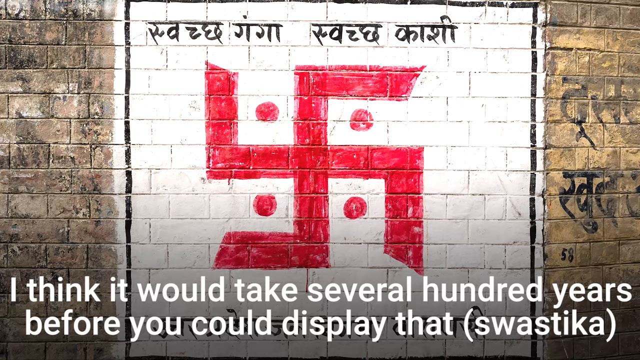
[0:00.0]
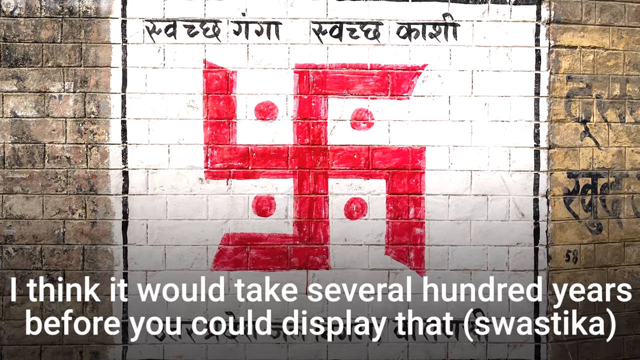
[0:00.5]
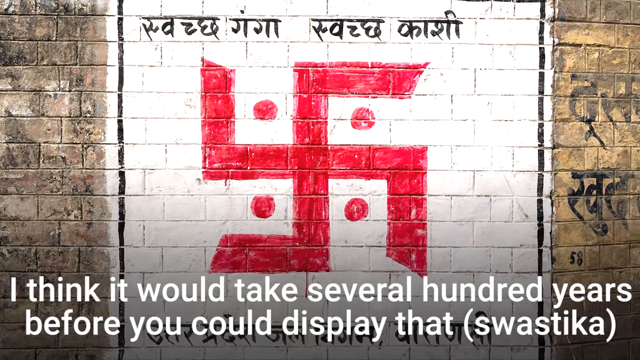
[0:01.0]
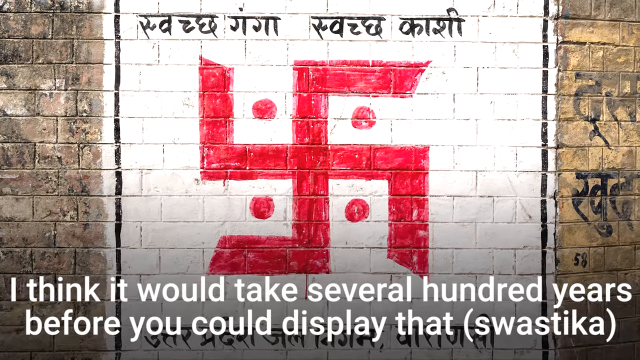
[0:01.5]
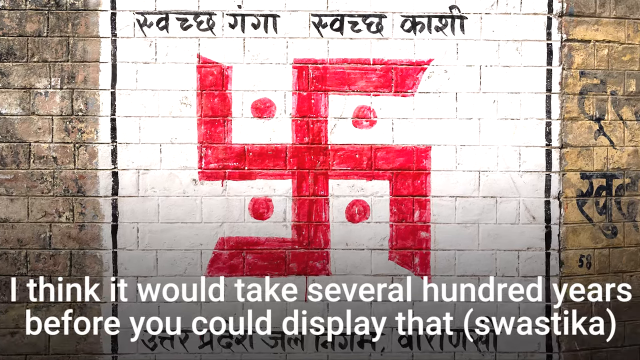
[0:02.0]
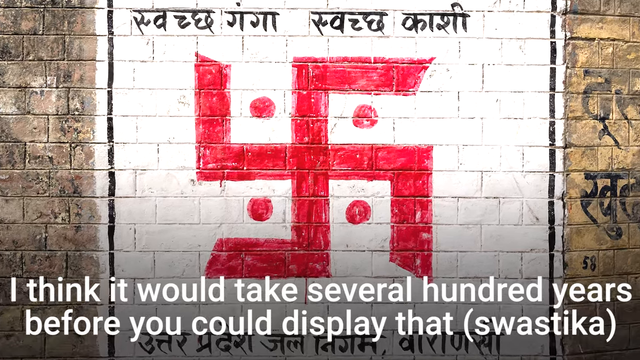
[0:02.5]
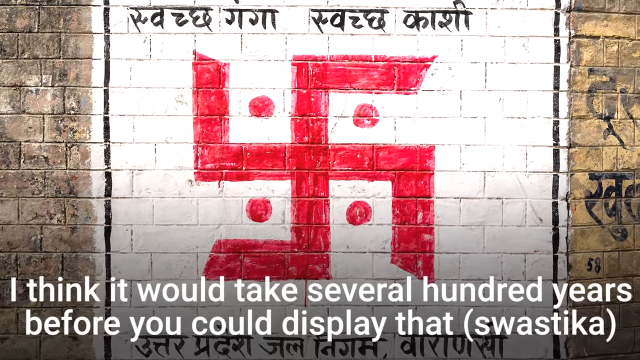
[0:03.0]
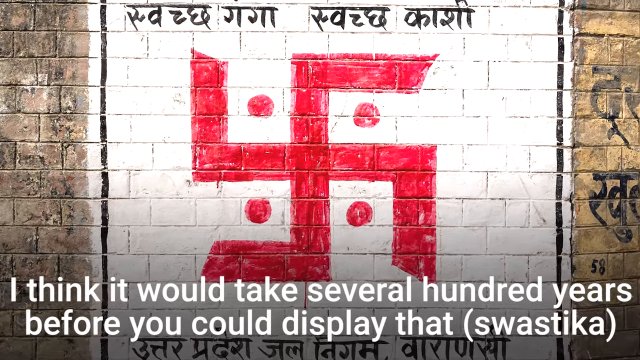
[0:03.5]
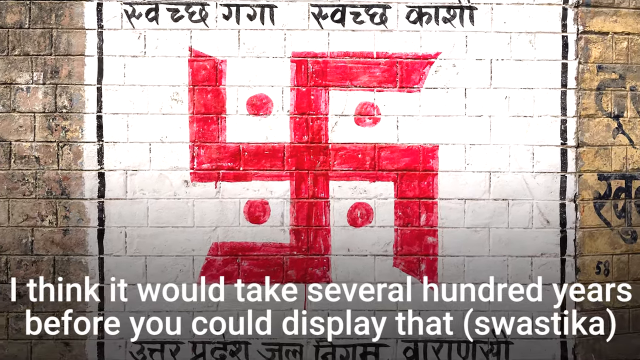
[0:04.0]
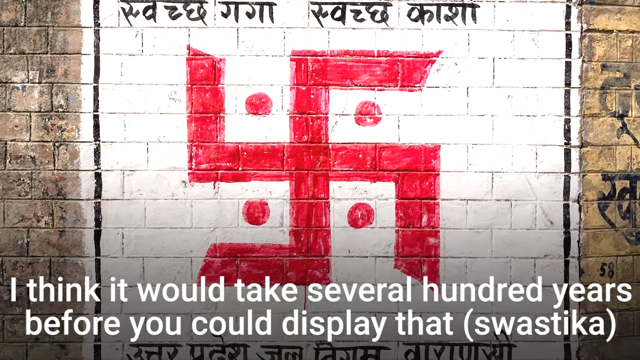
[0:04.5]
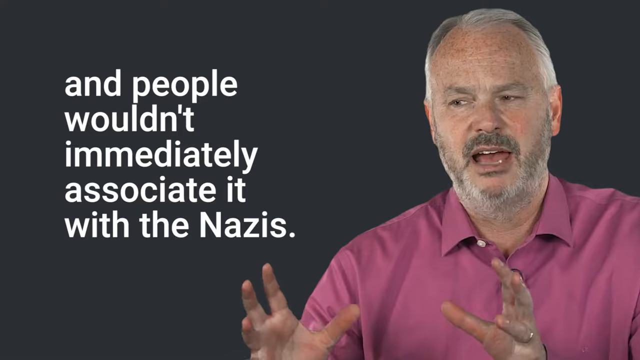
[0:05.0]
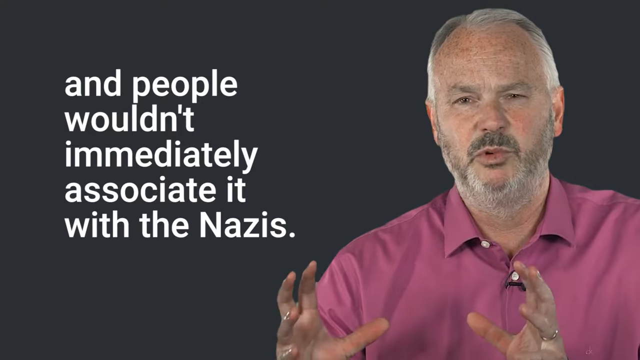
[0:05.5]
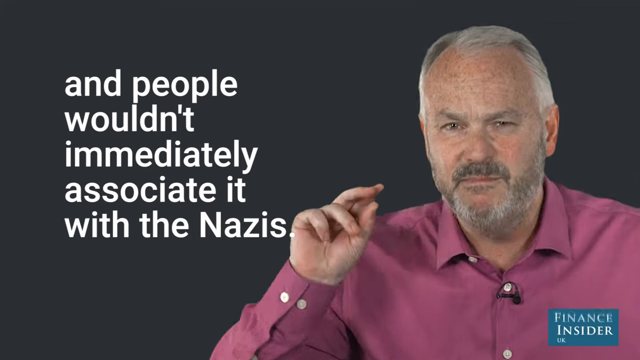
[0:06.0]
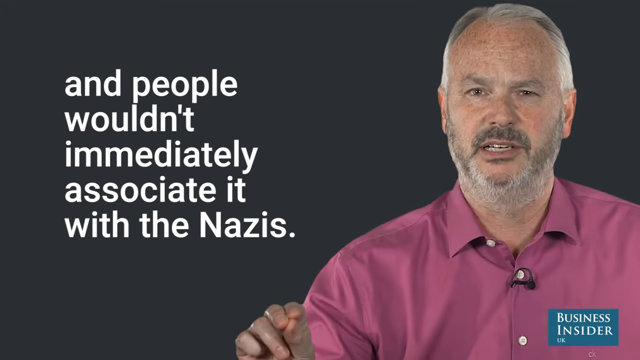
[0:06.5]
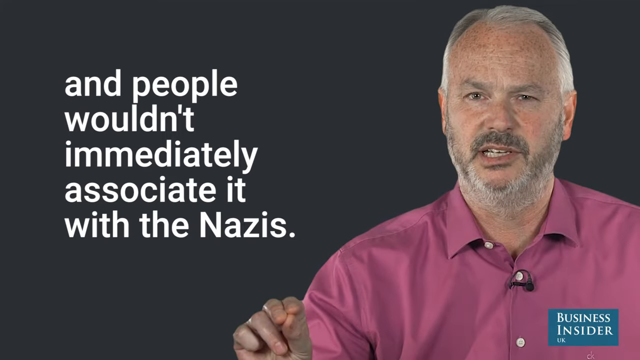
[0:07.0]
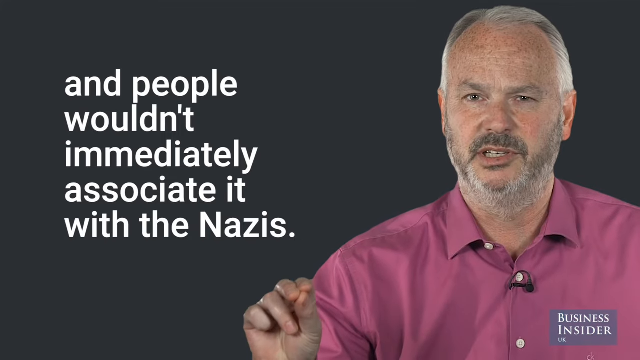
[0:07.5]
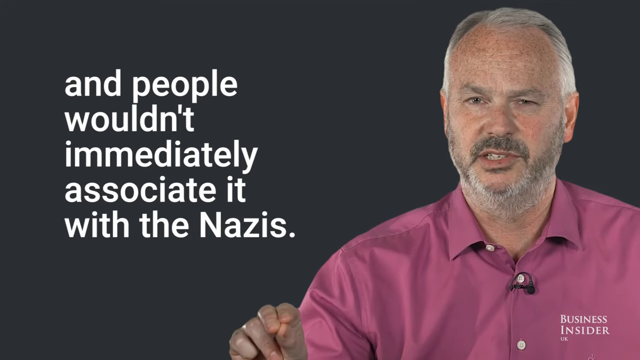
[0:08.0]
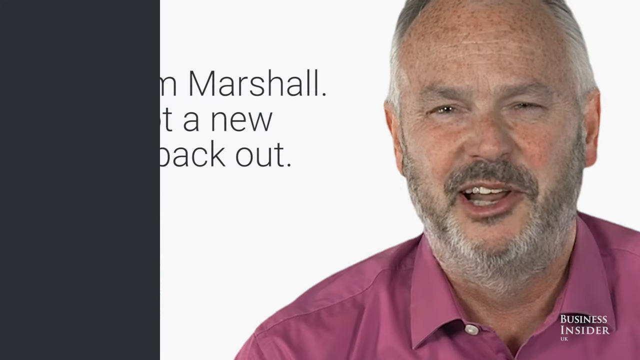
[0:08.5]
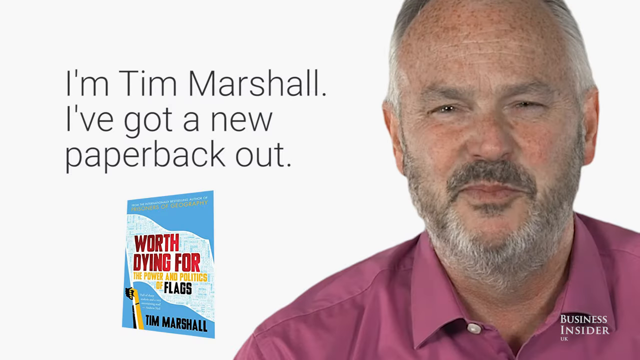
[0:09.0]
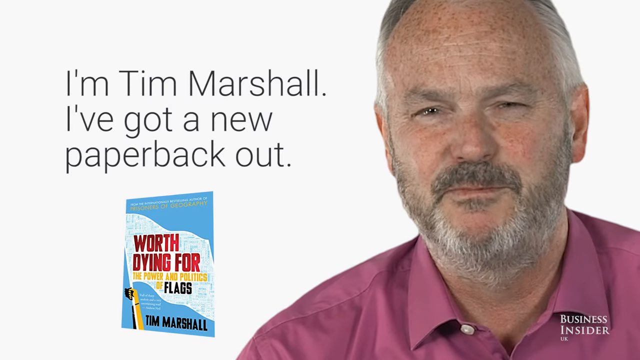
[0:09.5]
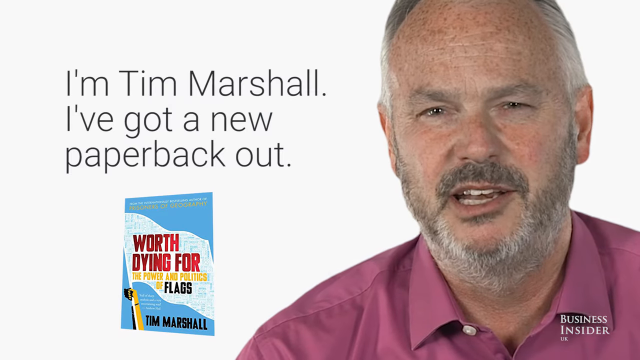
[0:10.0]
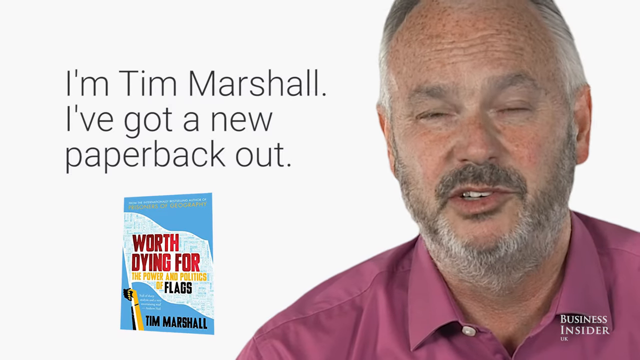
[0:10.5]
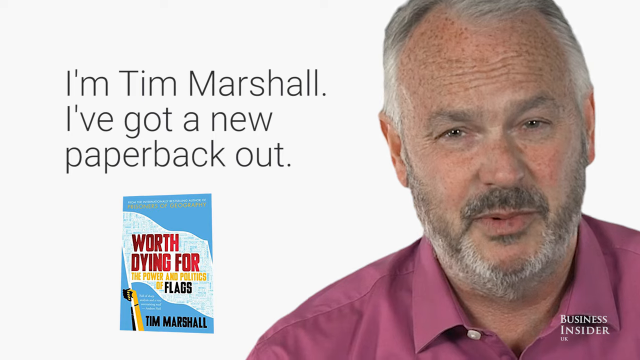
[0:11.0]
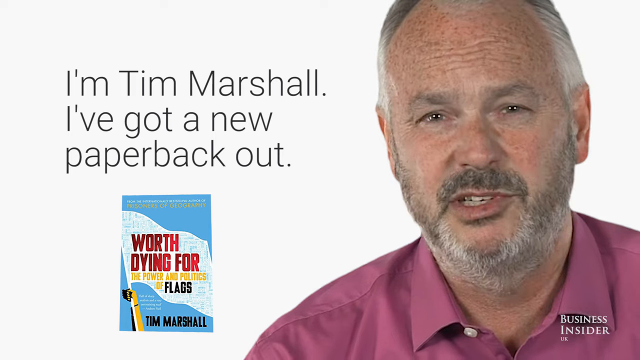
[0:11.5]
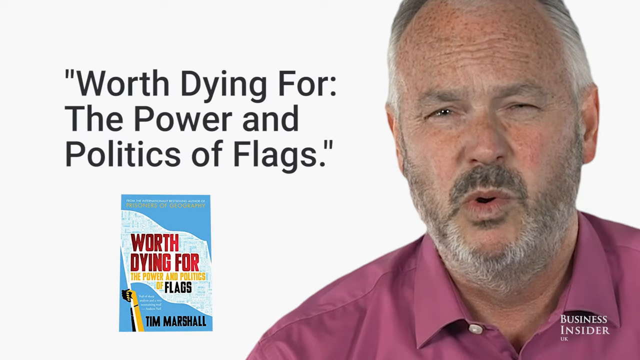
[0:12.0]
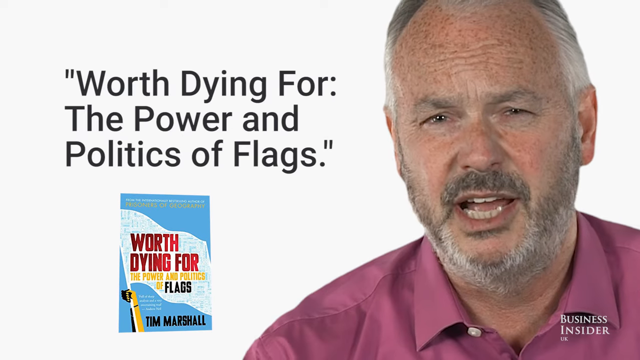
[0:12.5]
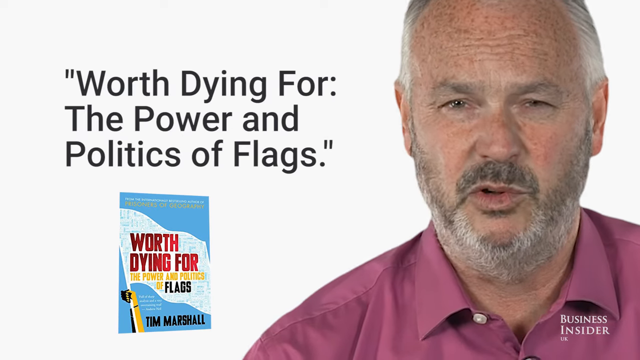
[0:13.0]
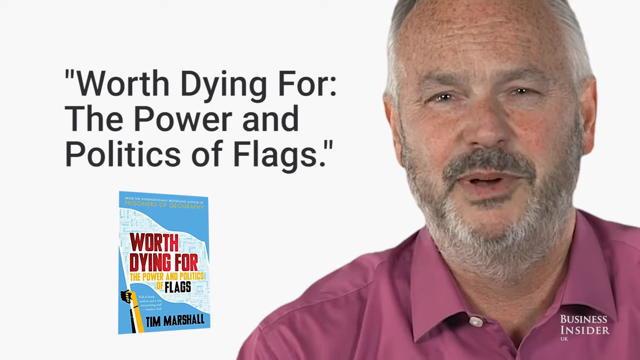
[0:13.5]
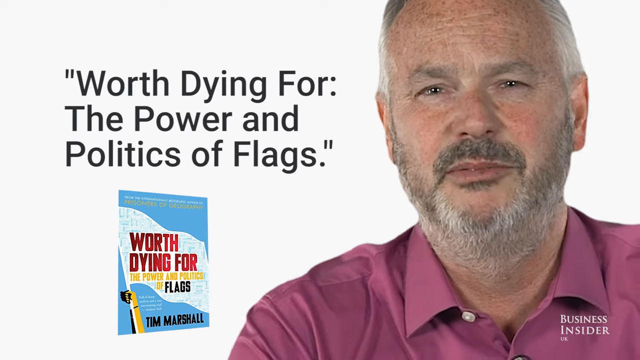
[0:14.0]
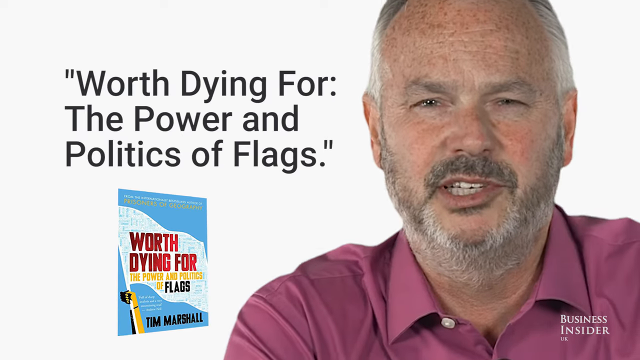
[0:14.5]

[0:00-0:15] A swastika appears that differs from the usual association: it has red circles in the squares of the swastika. A book bears the words "worth dying for the power and politics of flags." The setting seems professional, with a blank white space in the background. Tim, the man shown, seems to be middle-aged; he has gray hair and wears a burgundy shirt.